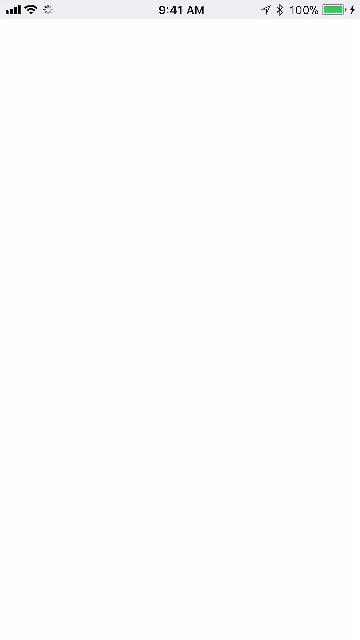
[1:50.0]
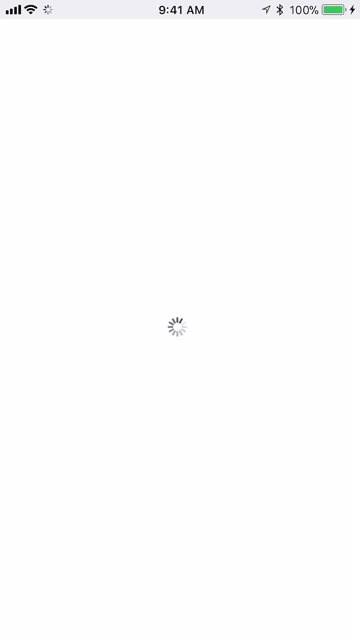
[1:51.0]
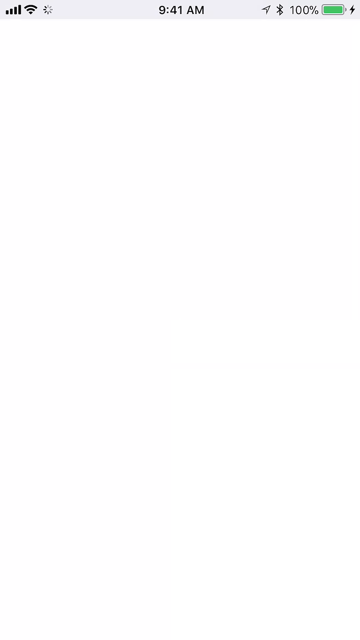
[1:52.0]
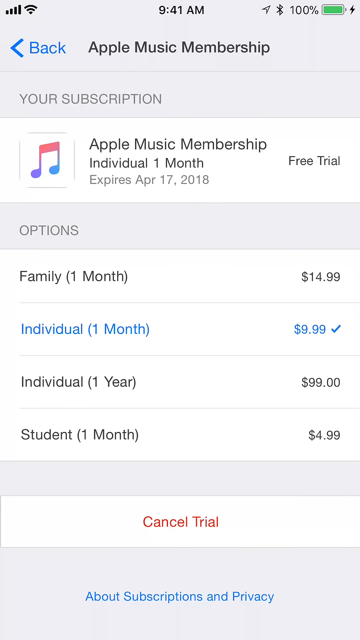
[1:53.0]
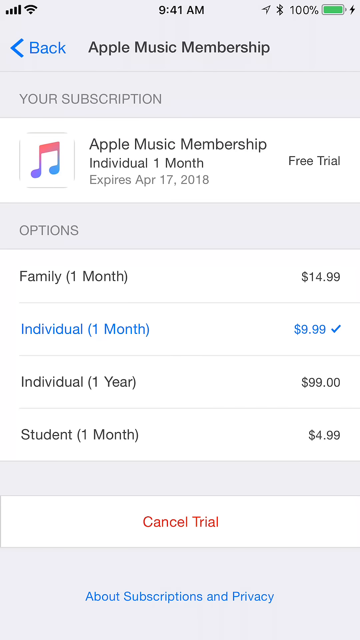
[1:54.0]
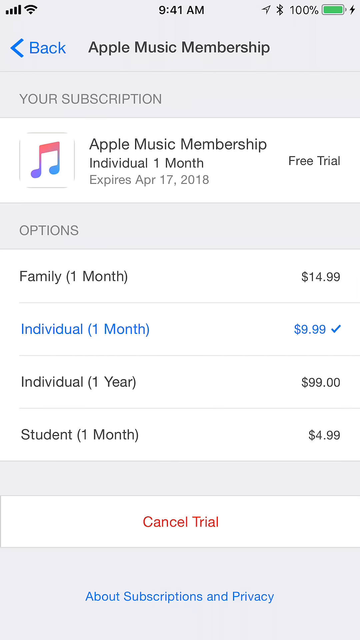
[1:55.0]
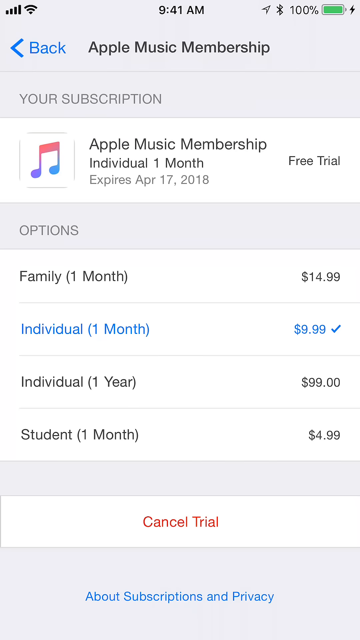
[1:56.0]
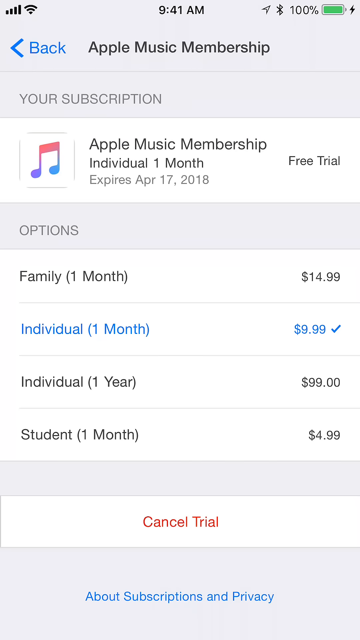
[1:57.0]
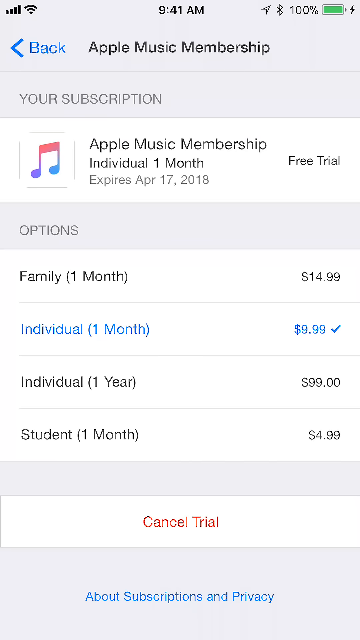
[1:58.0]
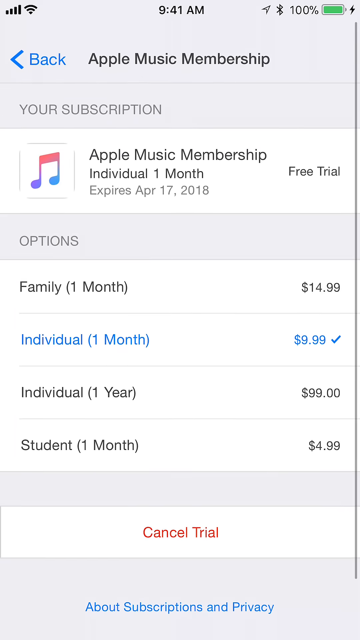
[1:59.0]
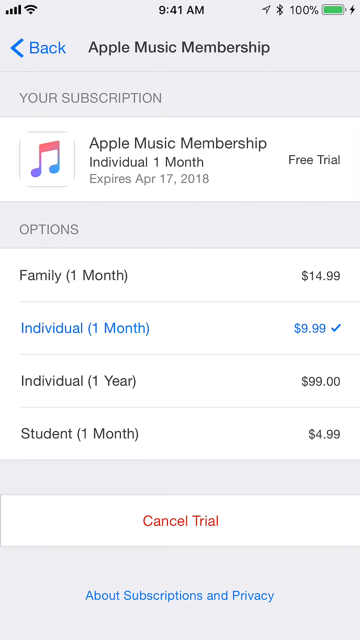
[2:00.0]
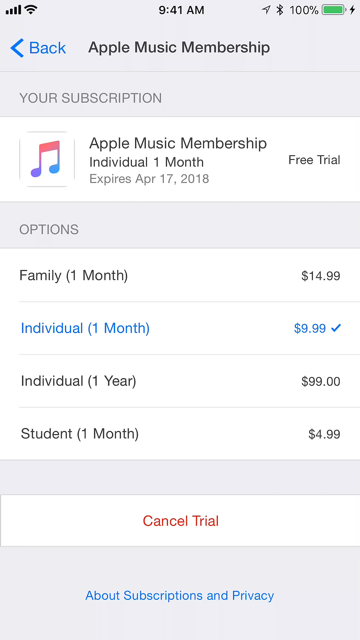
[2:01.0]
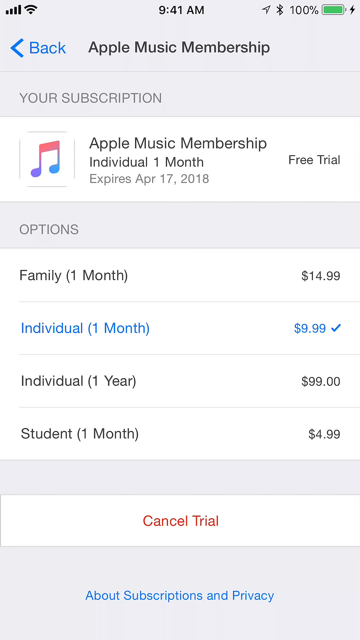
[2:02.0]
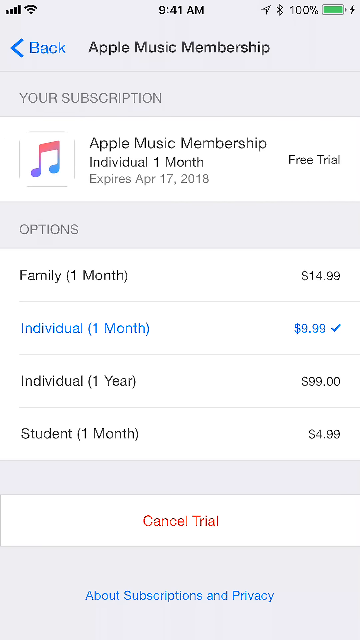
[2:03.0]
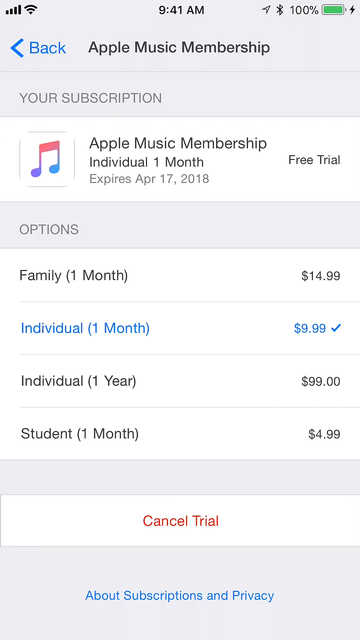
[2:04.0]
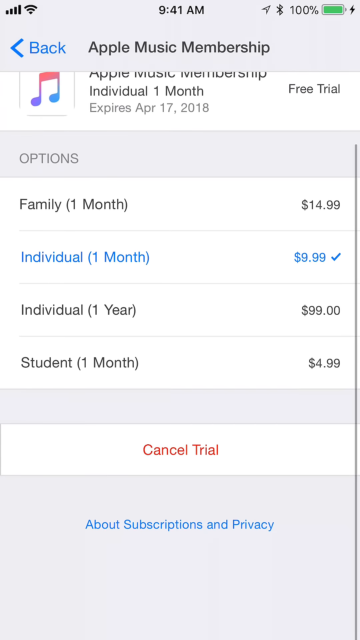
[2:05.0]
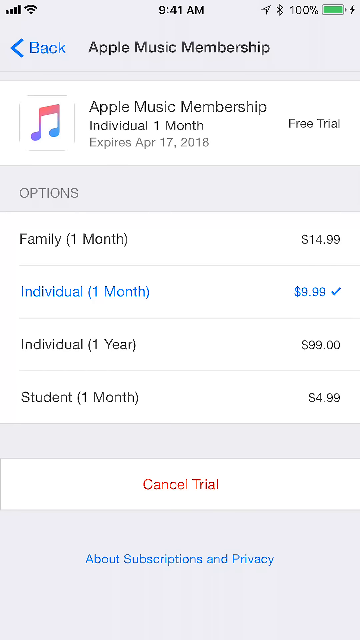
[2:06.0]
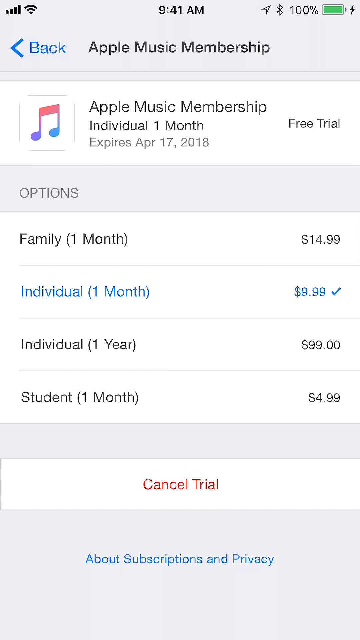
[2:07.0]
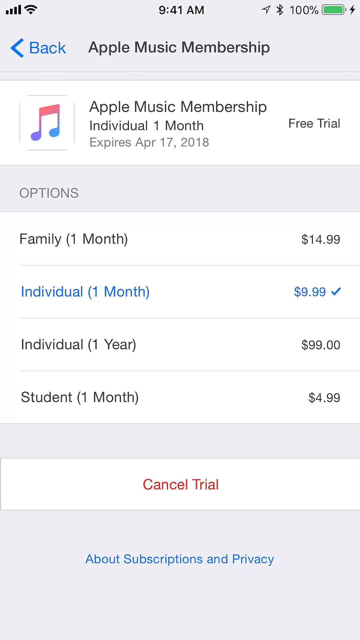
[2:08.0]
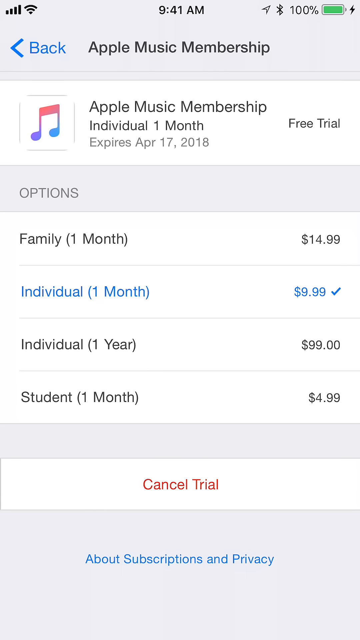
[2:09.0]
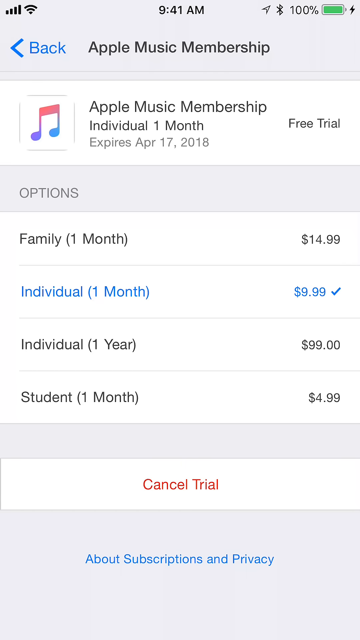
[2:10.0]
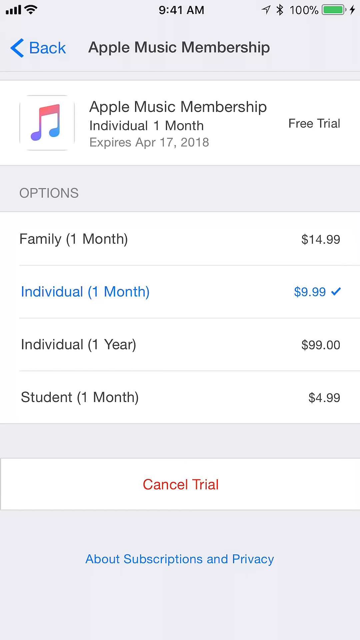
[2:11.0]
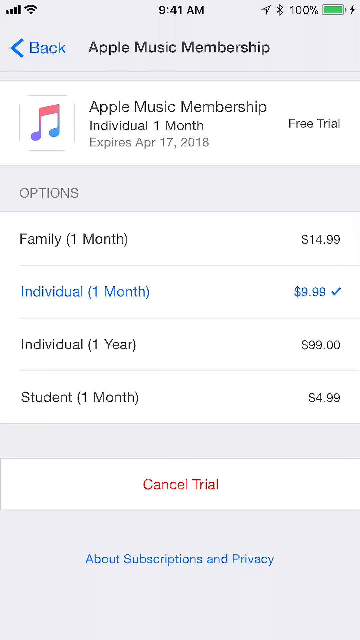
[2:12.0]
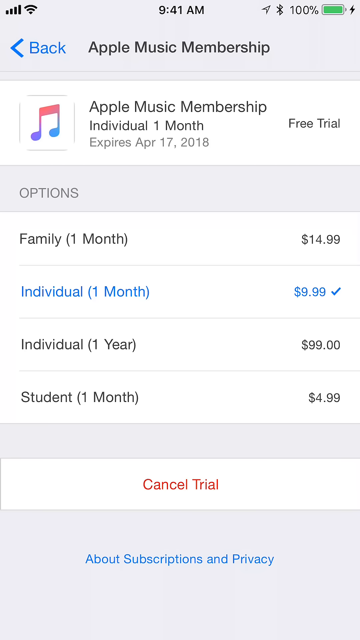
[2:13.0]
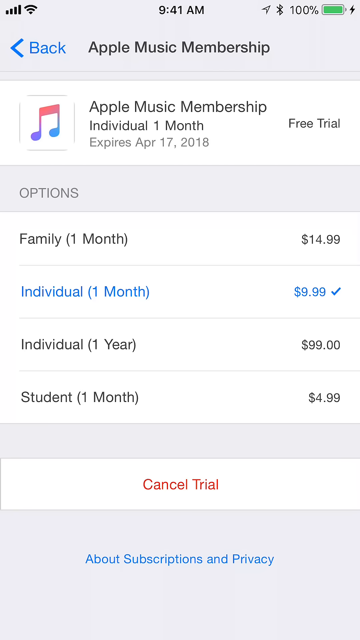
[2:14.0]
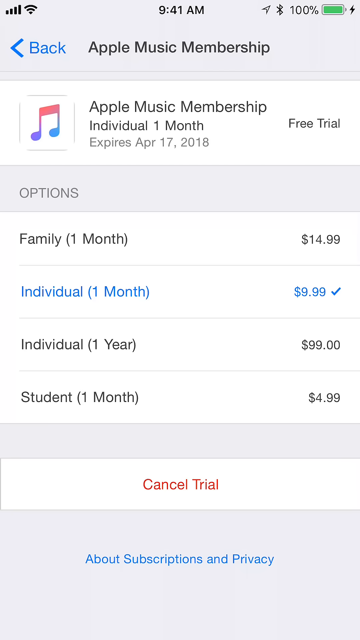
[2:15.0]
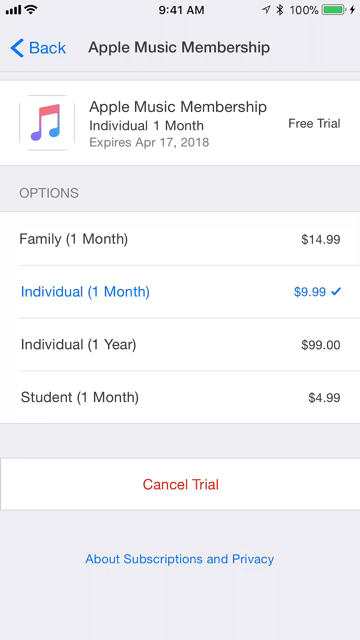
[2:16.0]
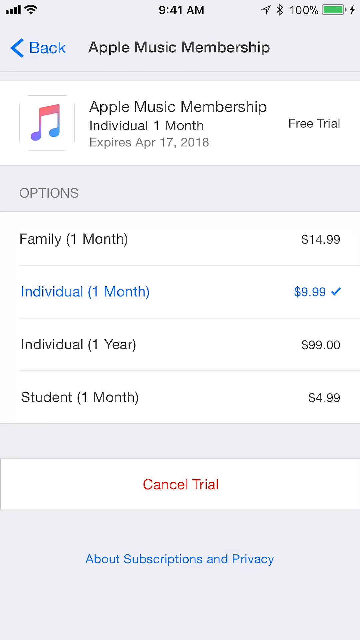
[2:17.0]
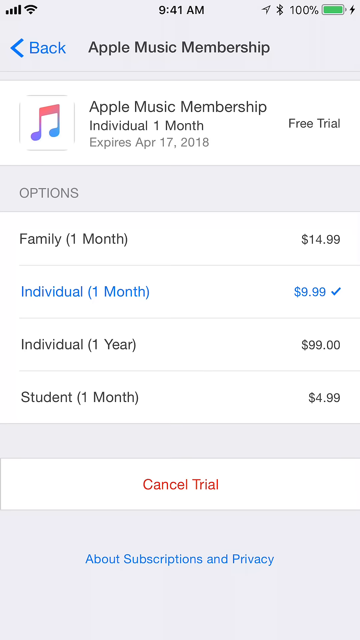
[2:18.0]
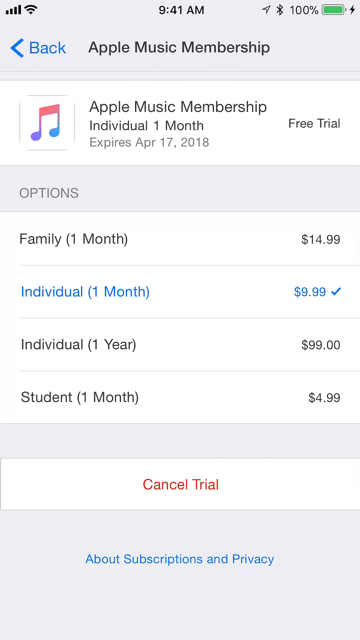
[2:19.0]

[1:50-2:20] What appears to be a blank white page, which kind of looks like an iPhone screen, shows a battery icon at the top that seems to be full, with a green energy bar and "100%" in black text to its left. In the middle of the top it says "9:41 AM". A menu then appears with the header "Apple Music Membership", with "back" and a chevron pointing left to the left of it. Underneath it says "your subscription", followed by an icon with a musical note and the text "Apple Music Membership. Individual one month free trial expires April 17, 2018". Under that is another header, "options", with a menu listing "family one month" "$14.99", "individual one month" "$9.99", "individual one year" "$9.99" and "student one month" "$4.99". Toward the bottom is red text that says "cancel trial".